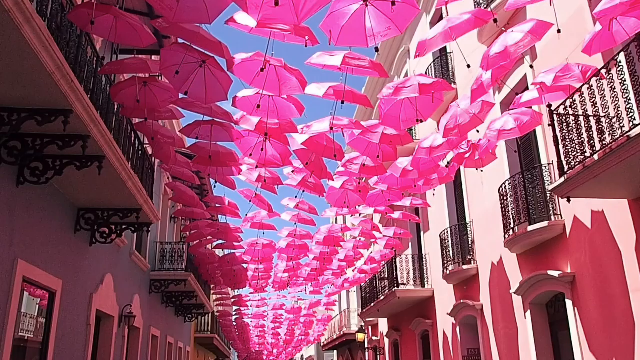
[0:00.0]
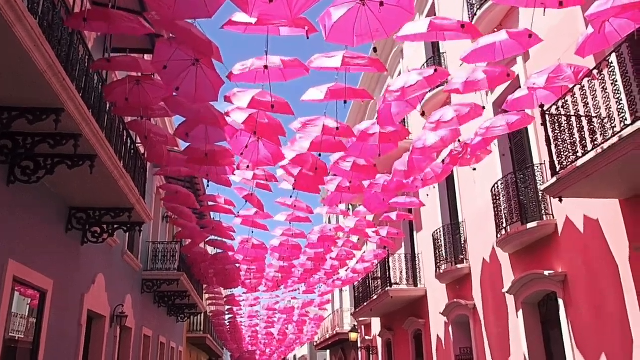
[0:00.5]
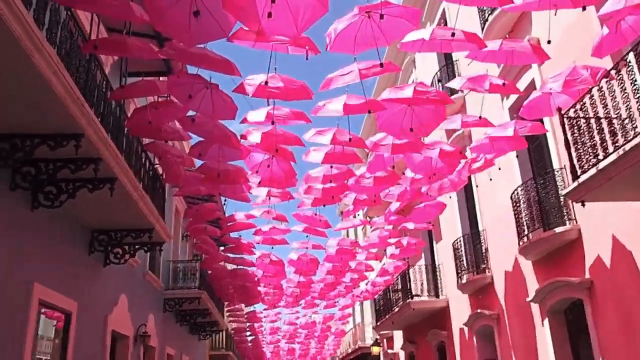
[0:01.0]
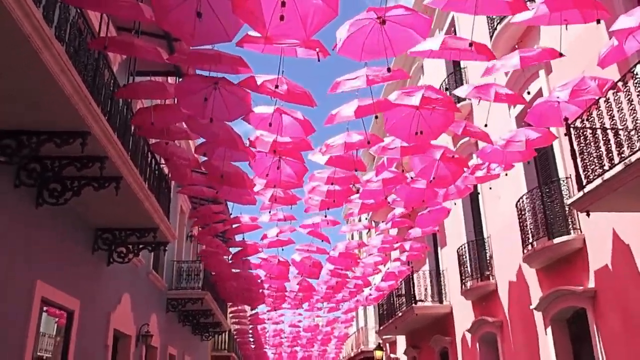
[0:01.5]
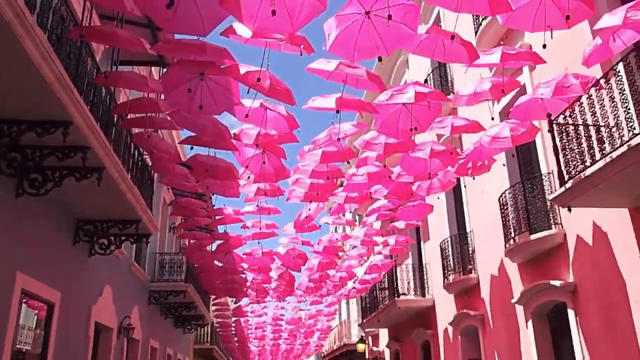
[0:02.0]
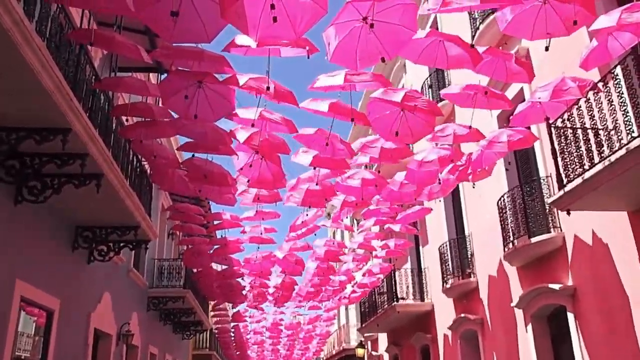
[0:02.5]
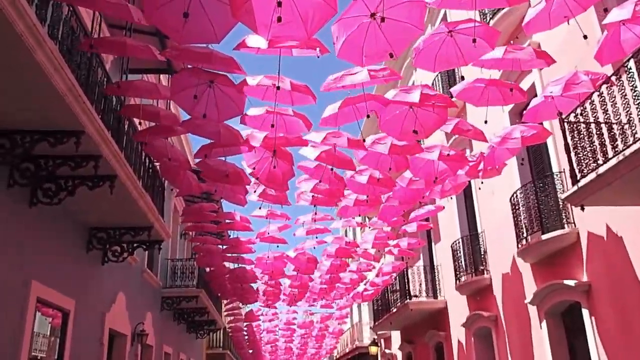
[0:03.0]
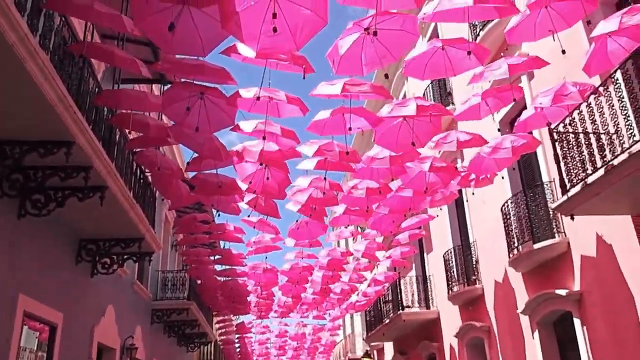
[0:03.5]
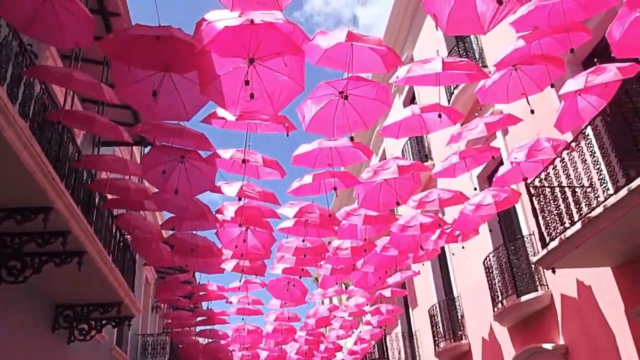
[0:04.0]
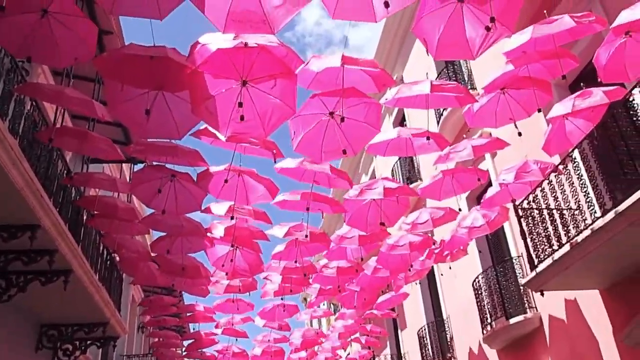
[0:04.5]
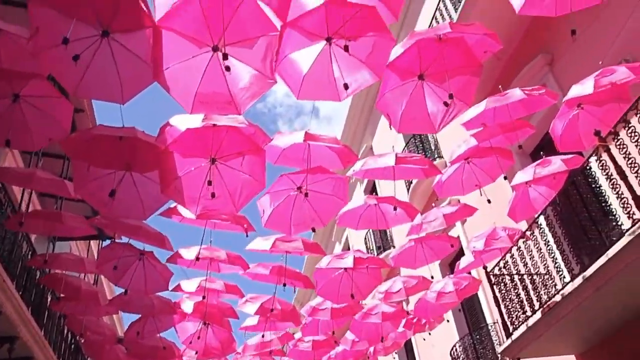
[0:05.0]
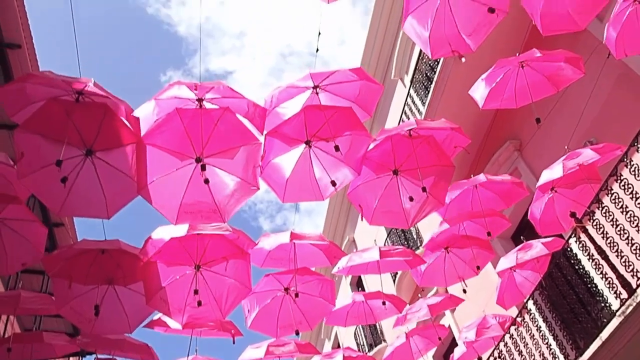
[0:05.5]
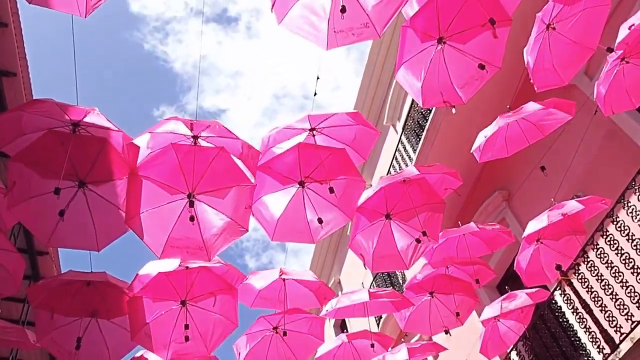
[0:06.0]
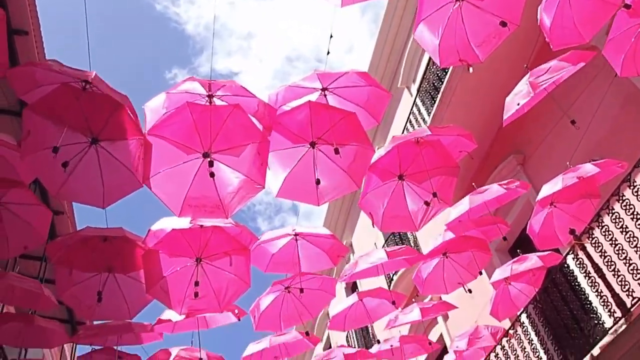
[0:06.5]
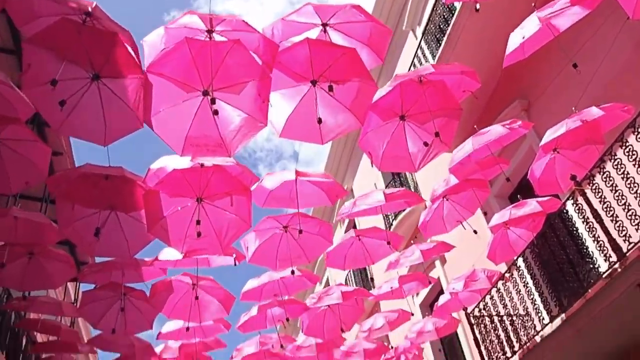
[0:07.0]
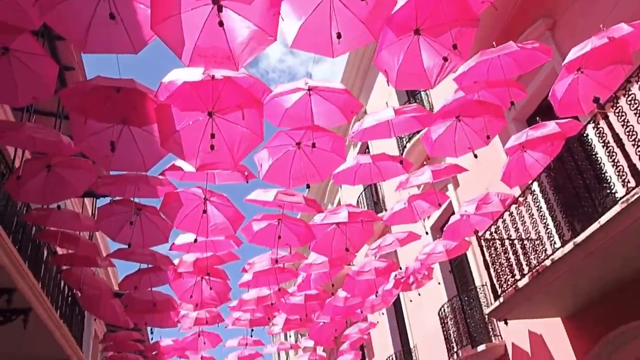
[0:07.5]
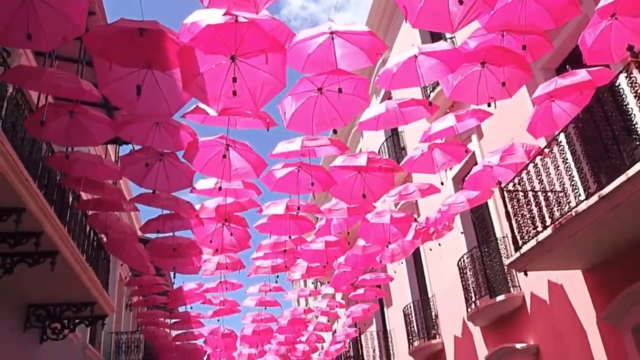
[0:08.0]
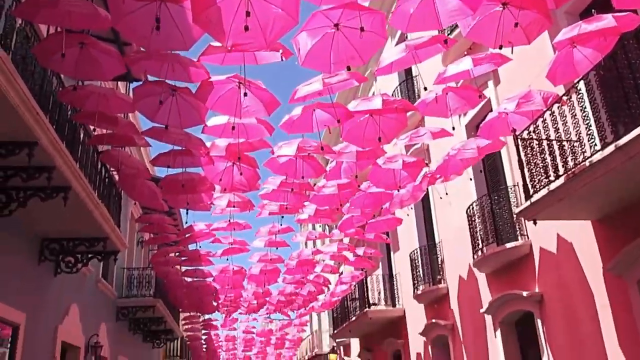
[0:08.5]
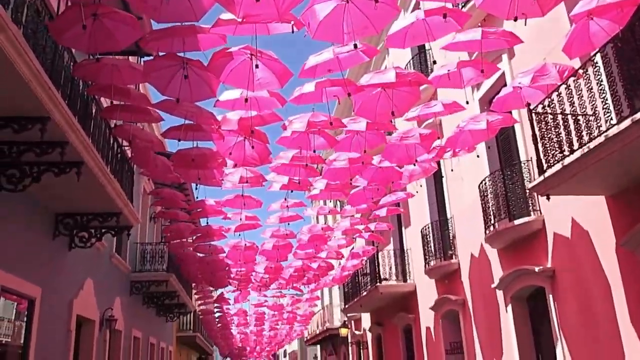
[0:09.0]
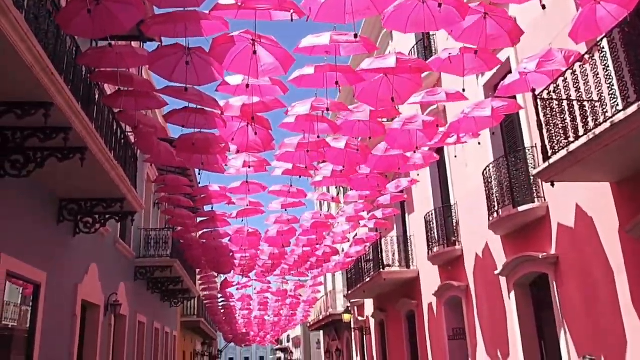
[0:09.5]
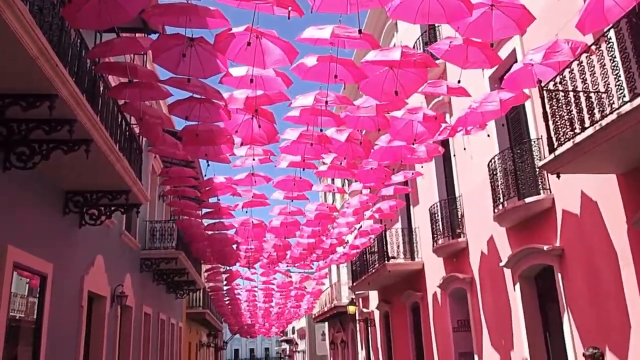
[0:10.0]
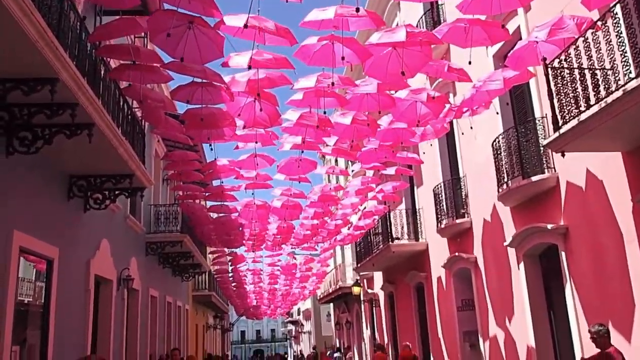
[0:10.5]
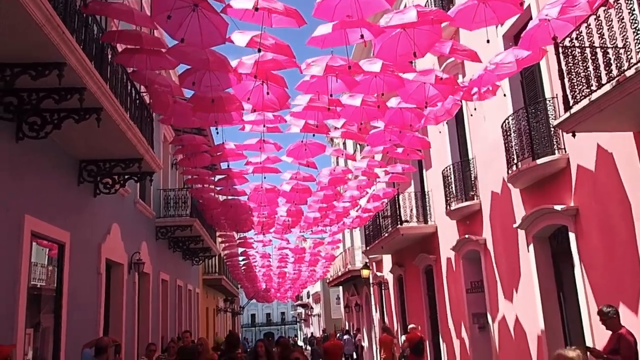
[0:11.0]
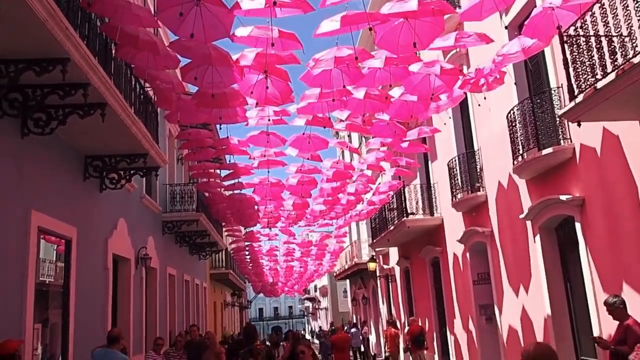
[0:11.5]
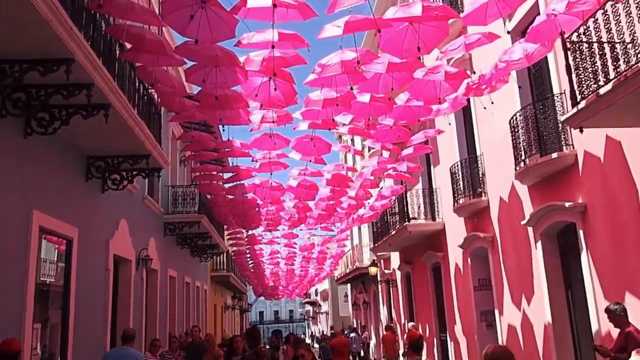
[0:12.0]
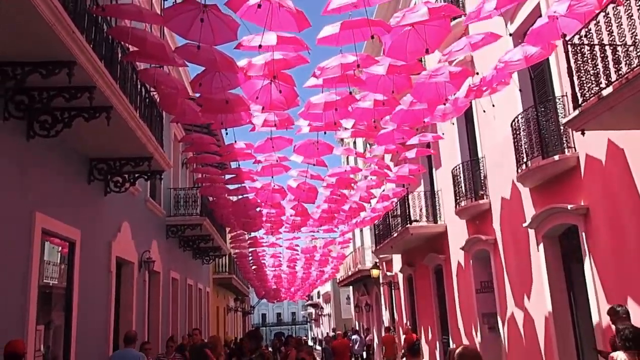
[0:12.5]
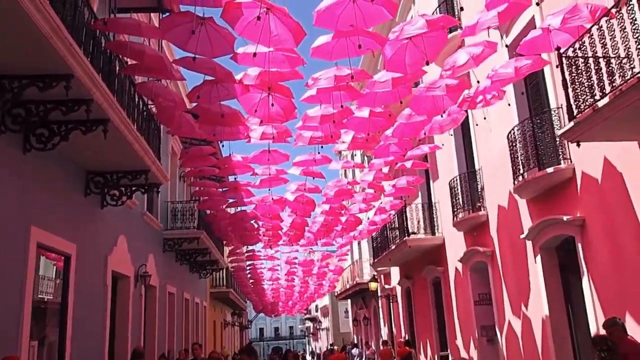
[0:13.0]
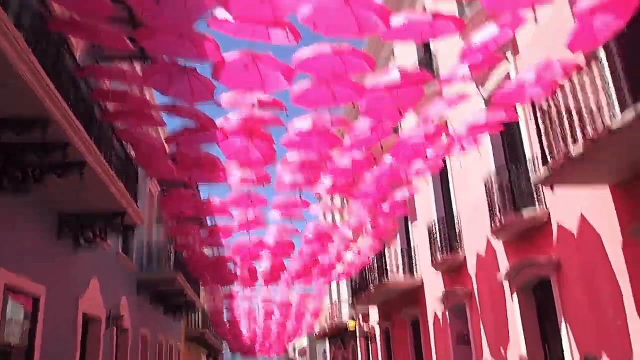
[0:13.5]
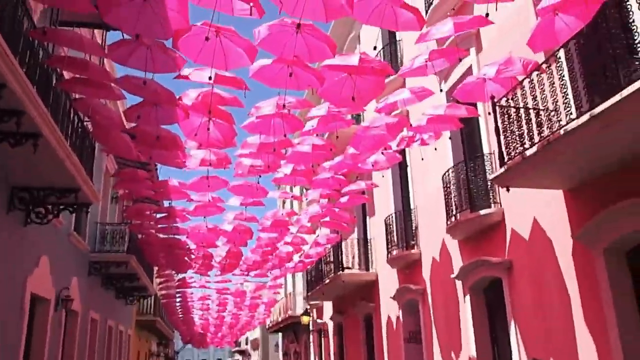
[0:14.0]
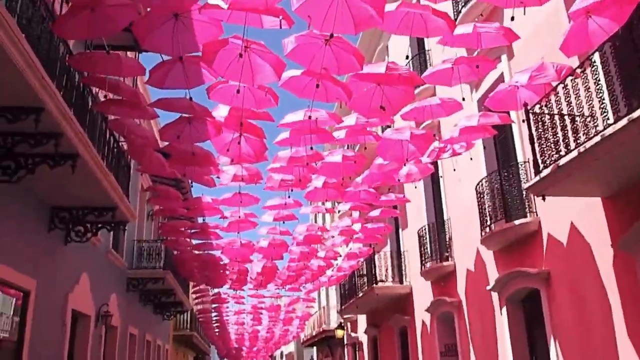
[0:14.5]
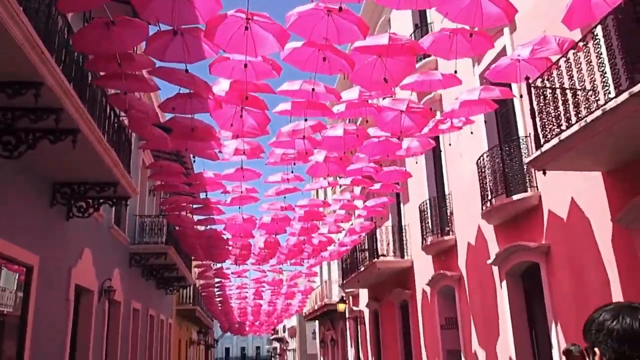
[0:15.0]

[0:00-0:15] The setting looks almost like a European city street, with the view directed upward toward the sky. On both the right and left are multi-floor, European-style buildings that look like apartment buildings or a hotel. Each of the balconies, whether semi-circular or rectangular, has ornate black iron rails, and the buildings are pink and salmon in color. Streams of pink umbrellas fill the space between the two buildings, so the sky is visible only between the umbrellas, giving the area a festive, almost parade-like vibe. The dangling umbrellas move in a strong breeze; perhaps they are getting ready for a parade. As the camera pans upward, some white clouds appear directly above the camera, but it is mostly blue sky, covered by the pink umbrellas, somewhat like performance art.